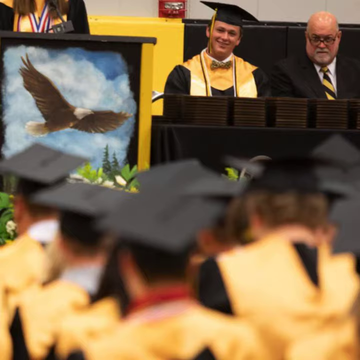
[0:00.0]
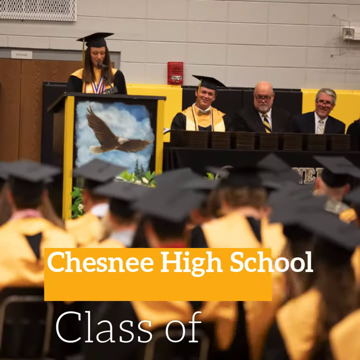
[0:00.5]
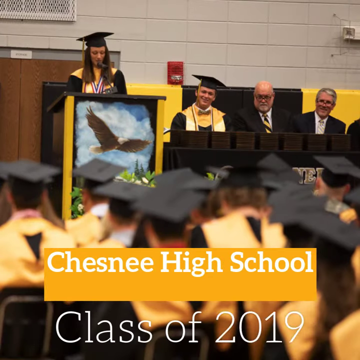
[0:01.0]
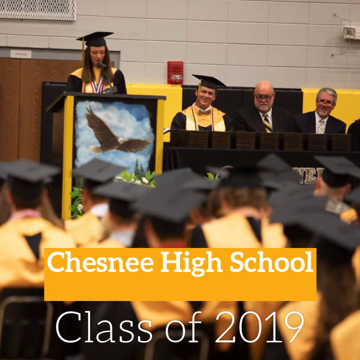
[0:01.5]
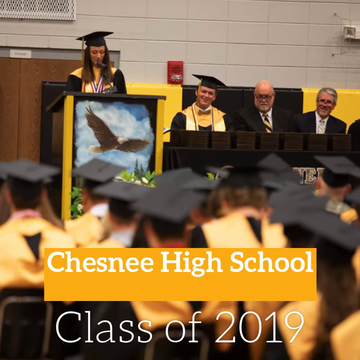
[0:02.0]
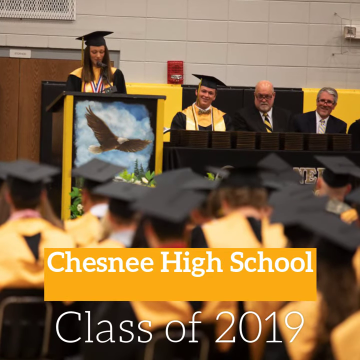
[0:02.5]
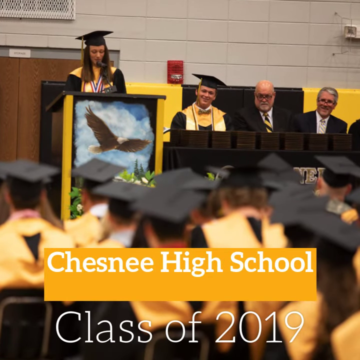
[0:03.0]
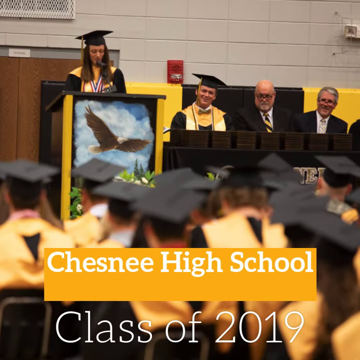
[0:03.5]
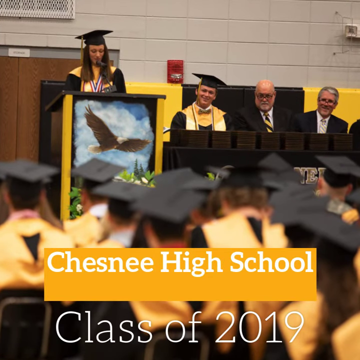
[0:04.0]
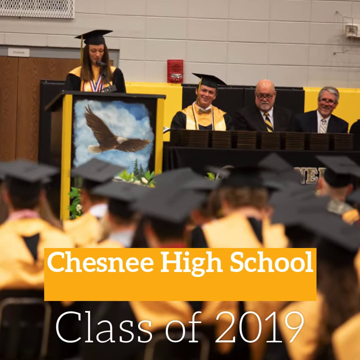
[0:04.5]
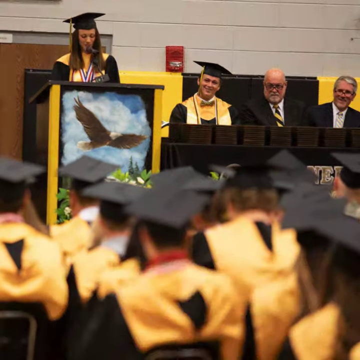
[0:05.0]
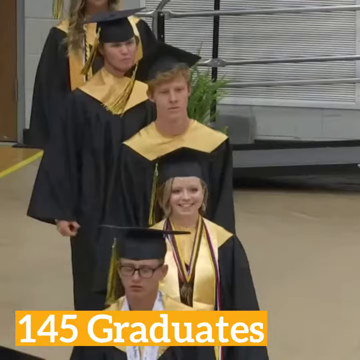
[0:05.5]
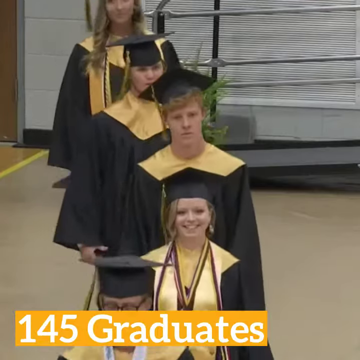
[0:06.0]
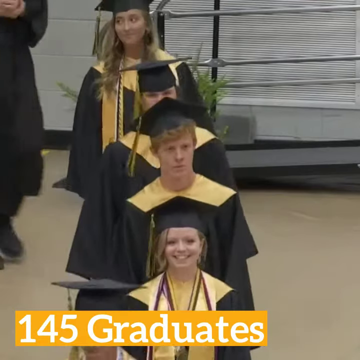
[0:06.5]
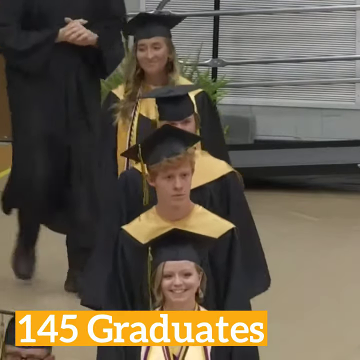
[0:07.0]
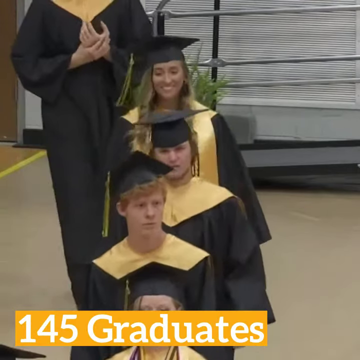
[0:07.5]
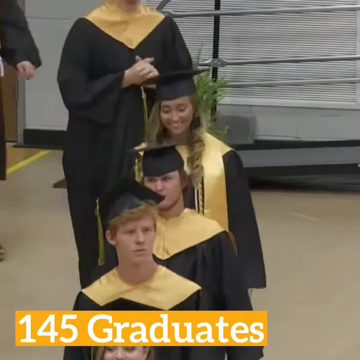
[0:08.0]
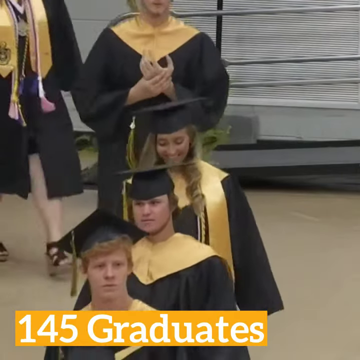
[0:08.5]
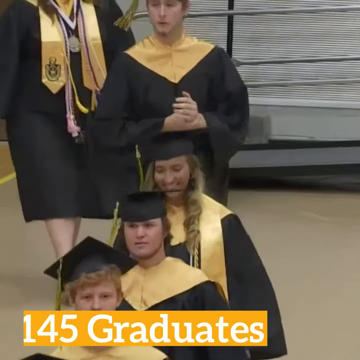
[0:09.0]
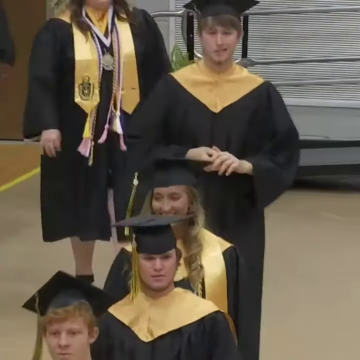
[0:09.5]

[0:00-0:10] The video opens with a still image of a group of people at a graduation ceremony. A person with long brown hair stands at a podium, speaking into a microphone. The podium has a picture of a flying bald eagle painted on it. Three people are seated to the right of her, facing out from the stage; one of them wears a graduation cap, and the other two look like older people who are staff of the school. In front of the viewer is a seated group of graduates facing the stage; their faces cannot be seen, but they all wear black graduation hats. At the bottom, an orange bar reads "Chesney High School", and underneath that is "class of 2019". The video then switches to moving footage of the students walking toward the stage, all wearing graduation caps and gowns with what looks like a yellow top part, with the text "145 graduates".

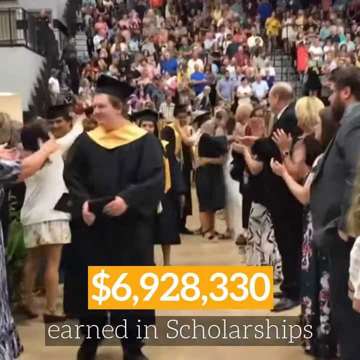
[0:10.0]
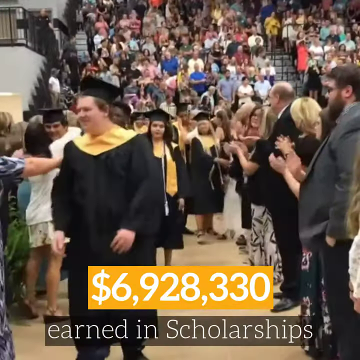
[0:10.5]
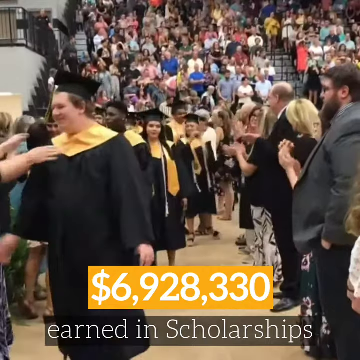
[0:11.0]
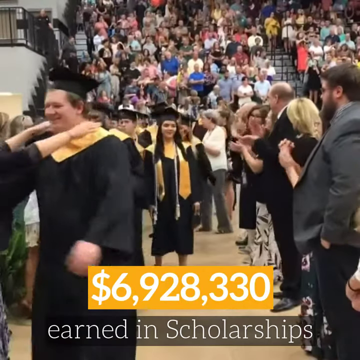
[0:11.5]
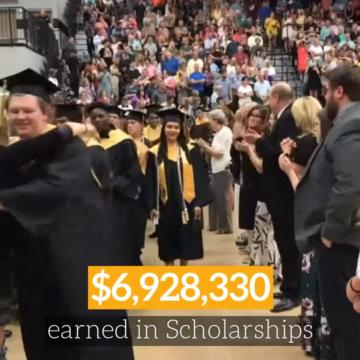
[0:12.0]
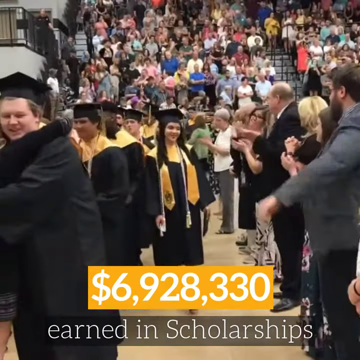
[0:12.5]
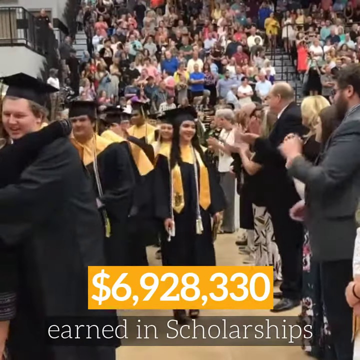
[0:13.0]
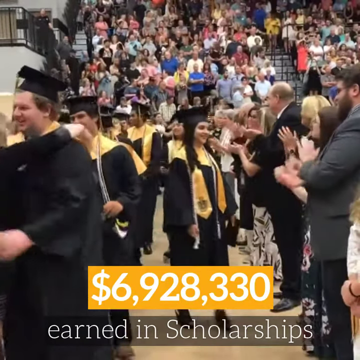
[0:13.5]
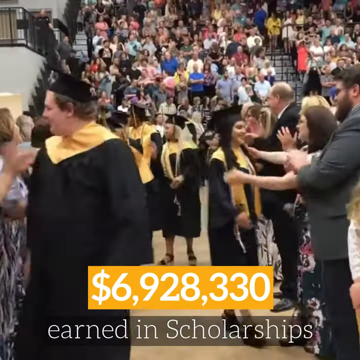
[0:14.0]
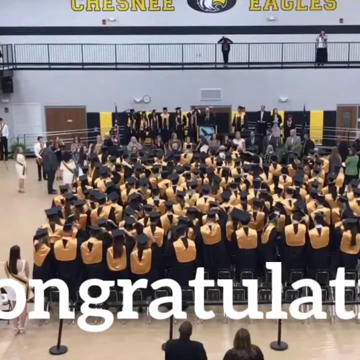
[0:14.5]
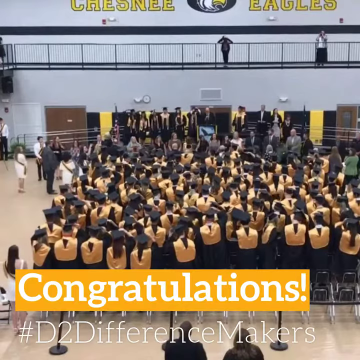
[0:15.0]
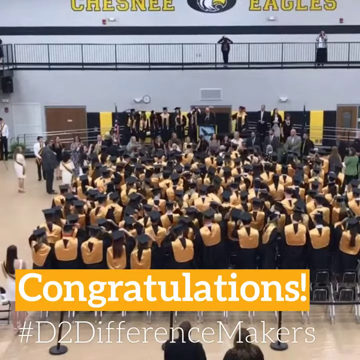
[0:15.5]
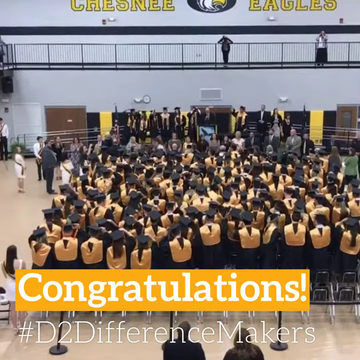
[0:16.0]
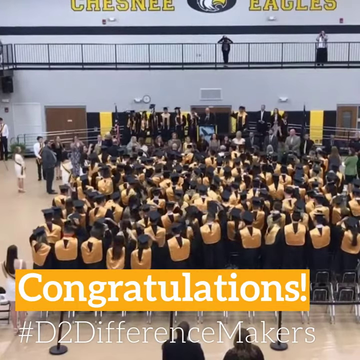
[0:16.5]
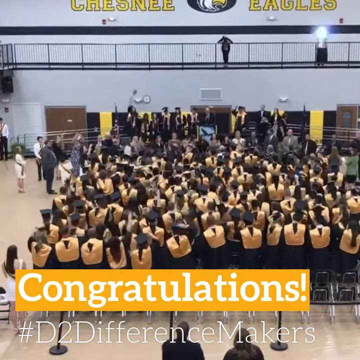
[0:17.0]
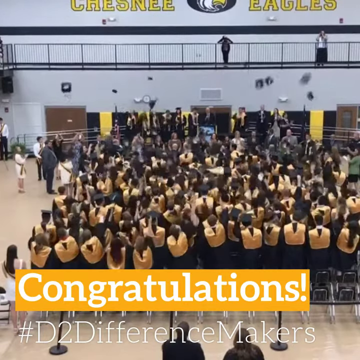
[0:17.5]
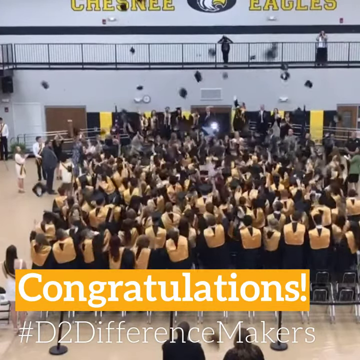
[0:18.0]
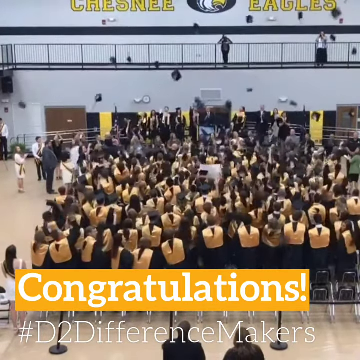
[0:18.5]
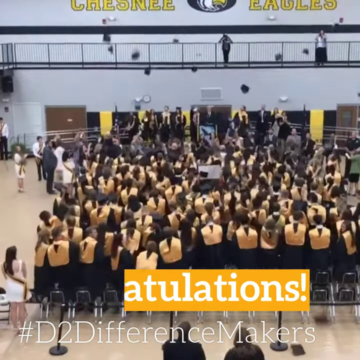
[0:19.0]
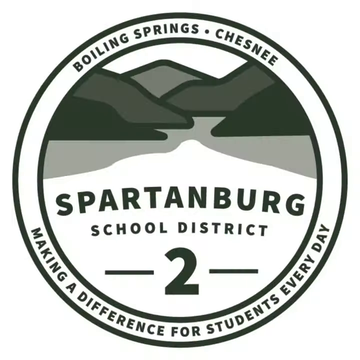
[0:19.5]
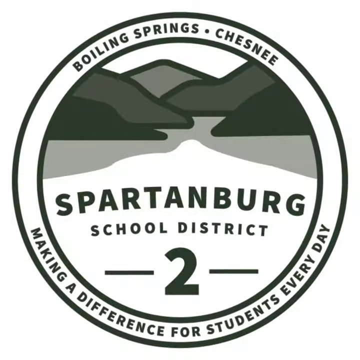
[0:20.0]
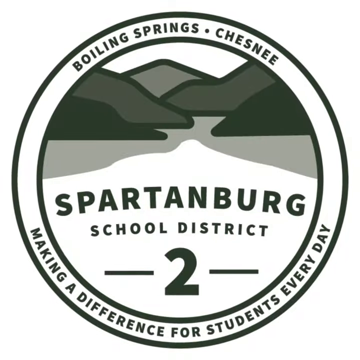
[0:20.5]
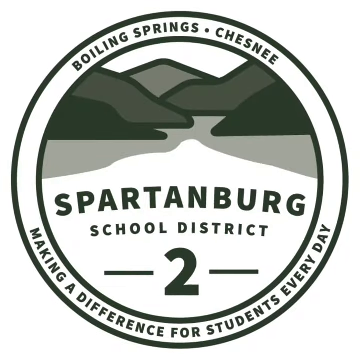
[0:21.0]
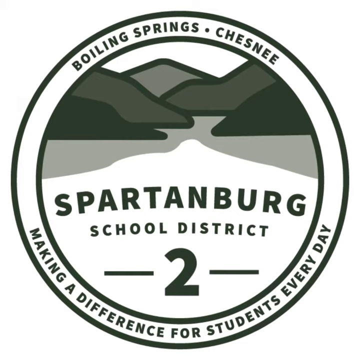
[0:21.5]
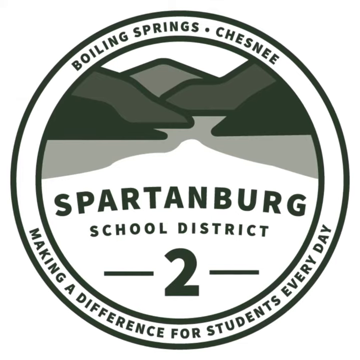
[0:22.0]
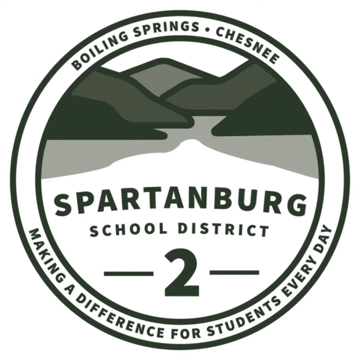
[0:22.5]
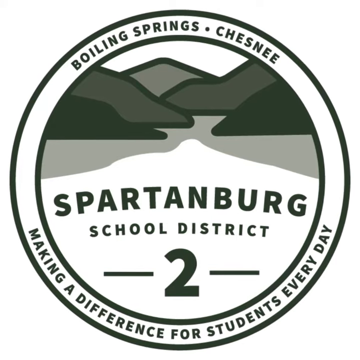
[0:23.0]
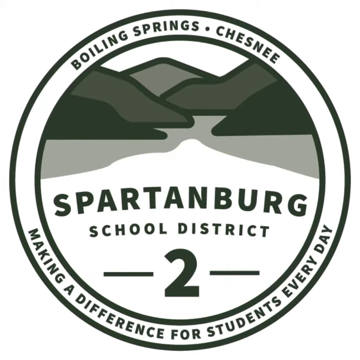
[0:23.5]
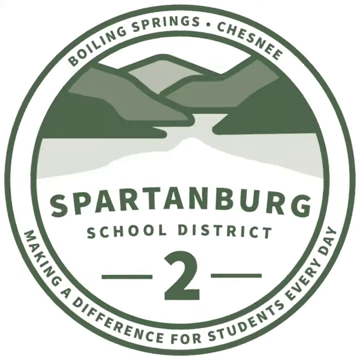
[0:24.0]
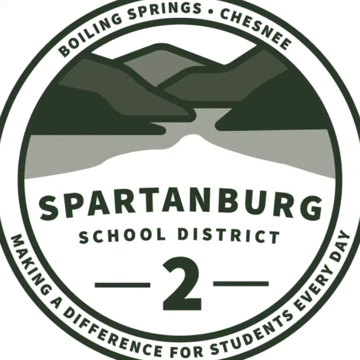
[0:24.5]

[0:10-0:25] What looks like a large group of people appears at a graduation ceremony. The graduates, in black and yellow gowns, walk through a kind of hallway of people lined up on either side of them, and behind that a large group of people in bleachers looks on. At the bottom of the video are the words "$6,928,330 earned in scholarships". The students walk along, and some of them hug some of the people standing alongside the aisle. The group of graduates is then seen on the floor of the ceremony area, which looks like it may be the high school gym, and they all throw their hats up in the air as "congratulations" appears at the bottom, followed by "#D2DifferenceMakers". Next comes a still image of a circular icon with "Boiling Springs, Chesney" at the top. Then there is an image of what sort of looks like mountains, with the text "Spartanburg School District 2 making a difference for students every day".